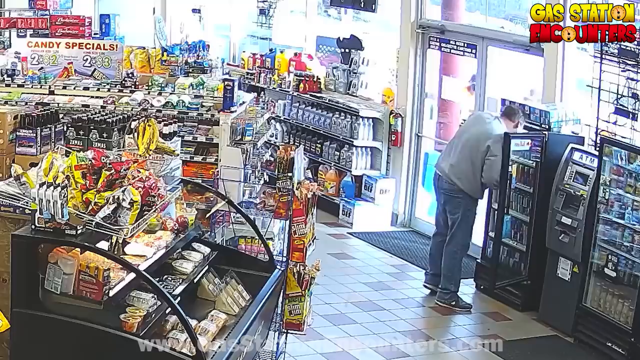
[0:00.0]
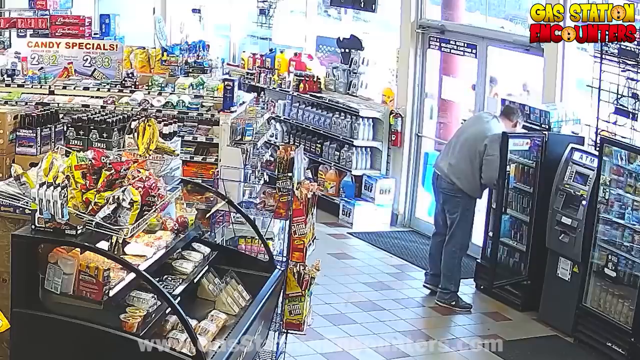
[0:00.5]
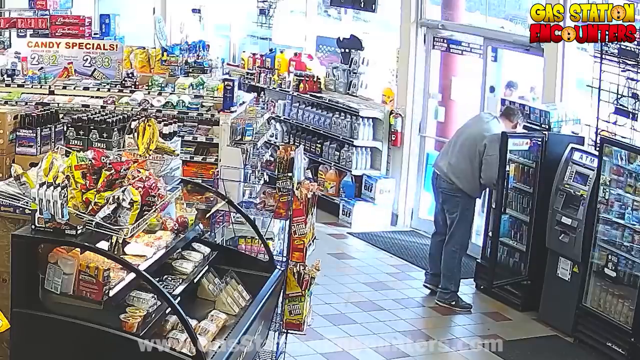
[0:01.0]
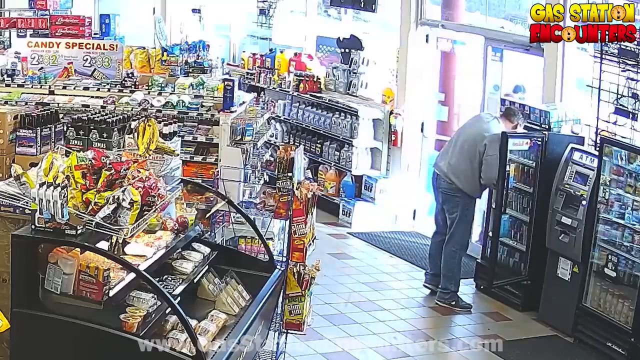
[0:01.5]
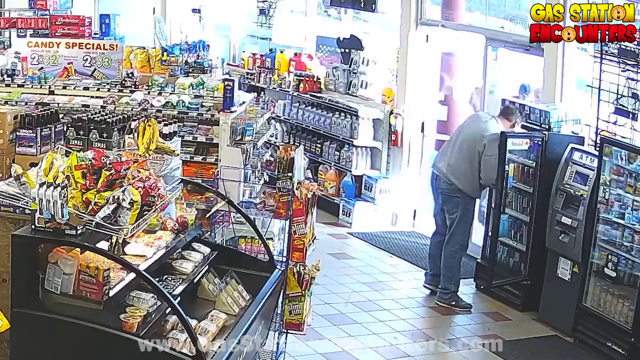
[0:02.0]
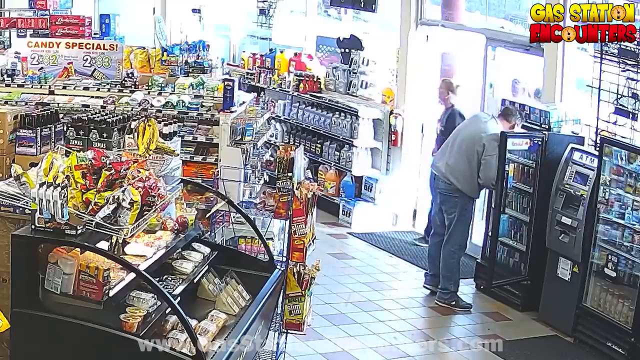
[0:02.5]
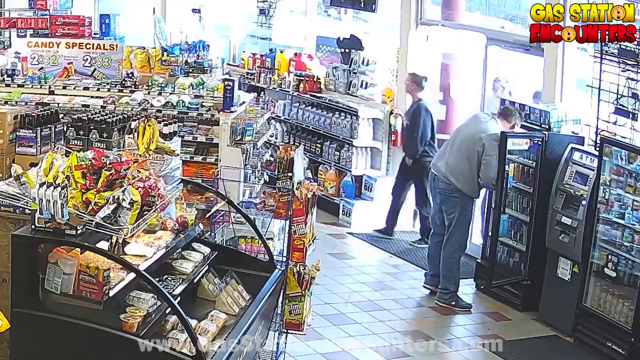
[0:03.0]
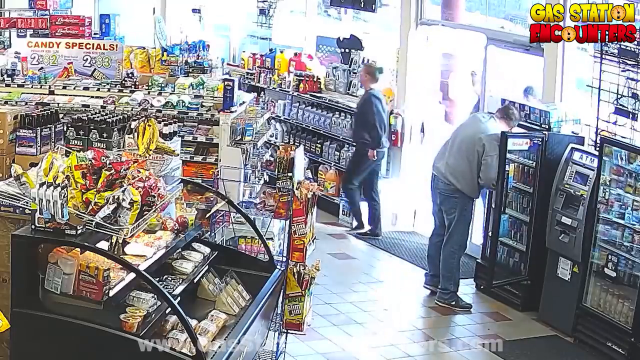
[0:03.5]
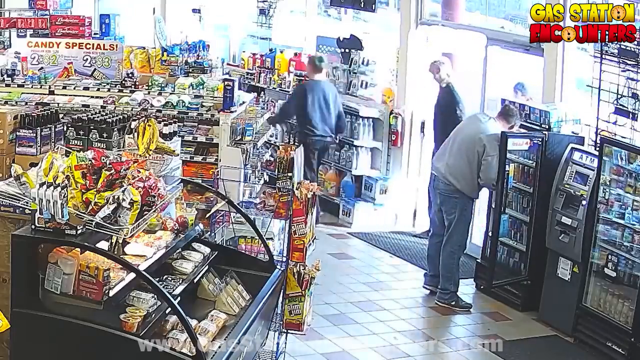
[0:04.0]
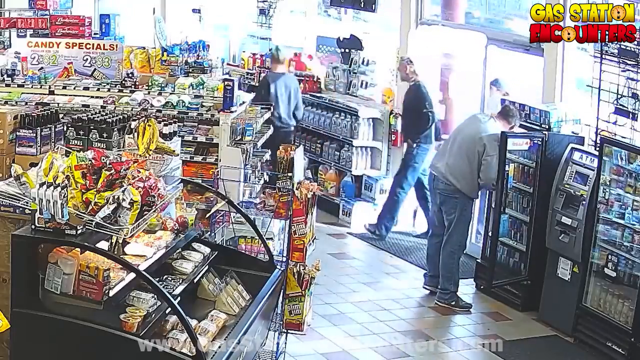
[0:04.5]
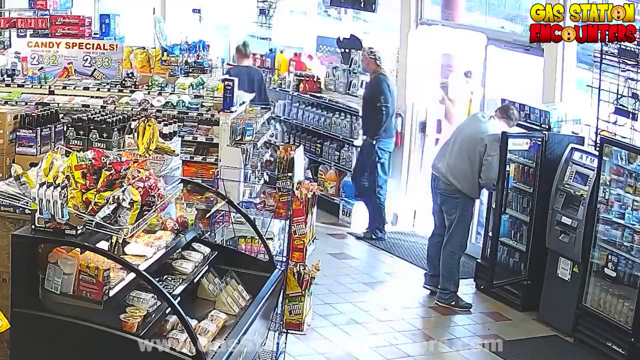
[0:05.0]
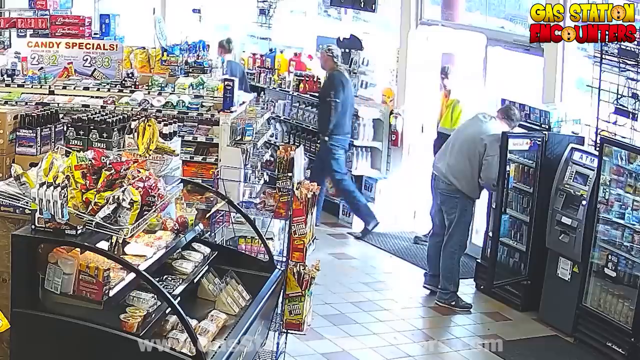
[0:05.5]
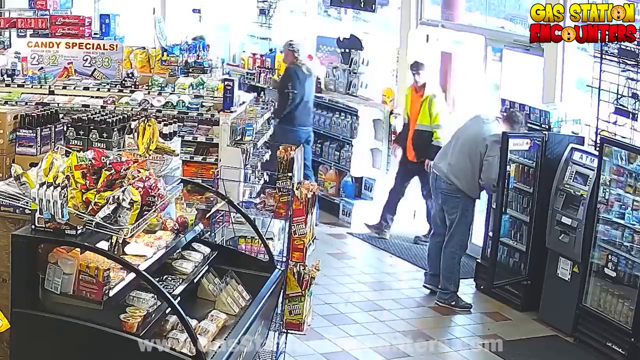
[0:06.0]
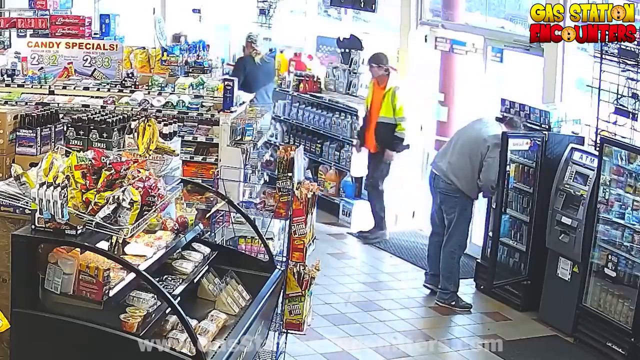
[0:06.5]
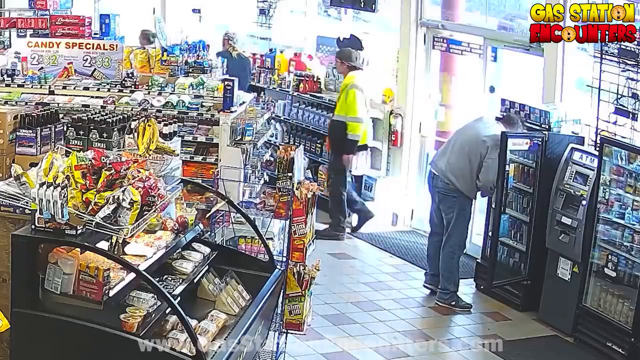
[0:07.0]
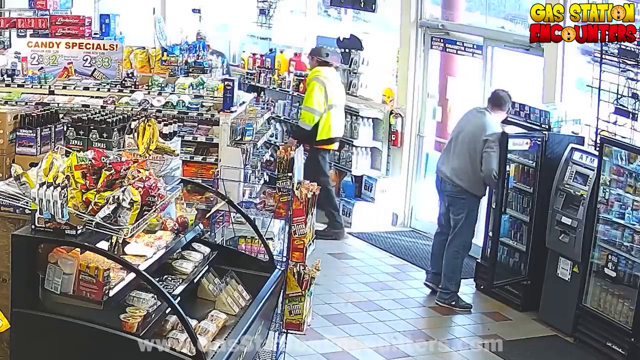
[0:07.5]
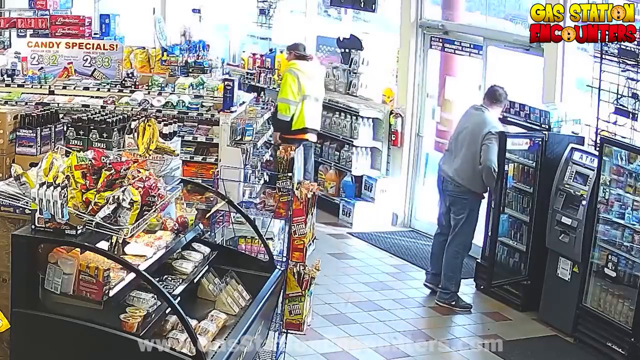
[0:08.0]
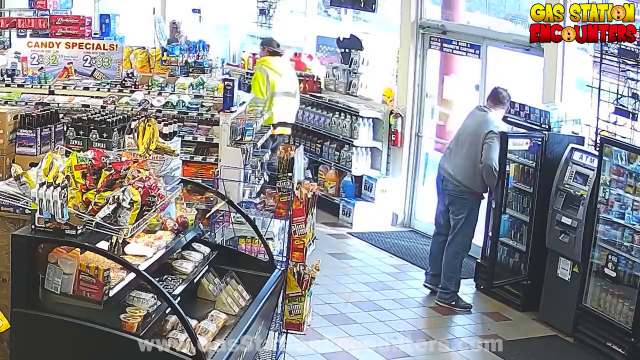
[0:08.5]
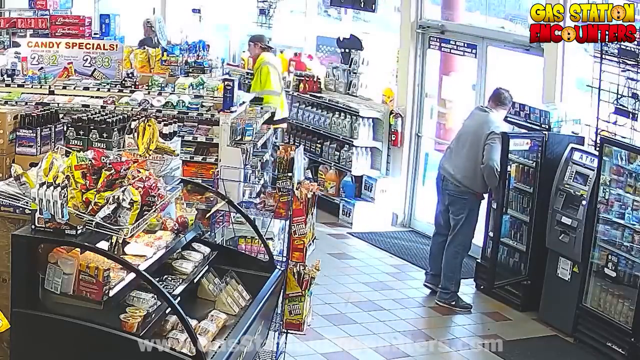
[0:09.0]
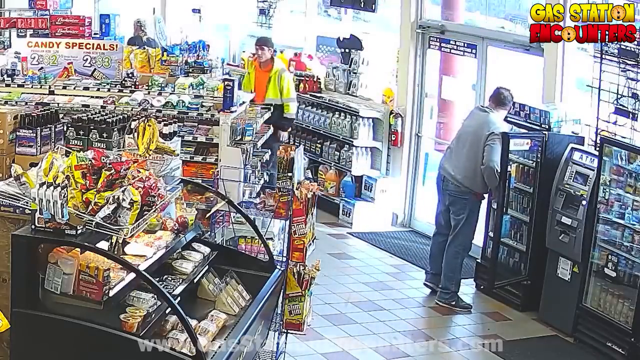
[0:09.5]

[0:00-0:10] Three different people enter a gas station, and the scene is shown from inside. On the left there is a rack with various types of chips, and to the right of it there appear to be yellow bananas. Below that are various refrigerated foods. To the right of that is the flooring, a square tile pattern of mostly white tiles with an occasional brown tile. Further right, a man in blue jeans and a gray shirt opens a cooler to get a drink. To his right is an ATM, and to his left is the doorway with a black mat at the bottom. The third person to walk in the door wears a yellow vested jacket over an orange sweatshirt, has light skin, and turns around.